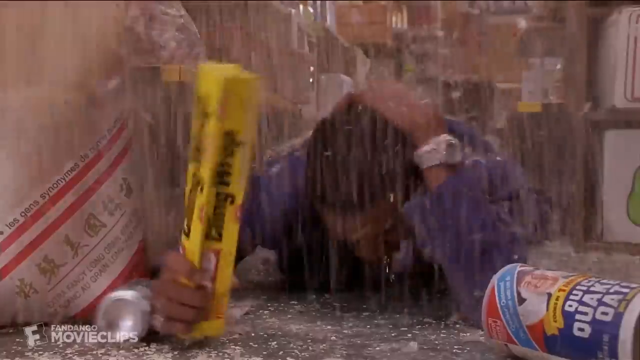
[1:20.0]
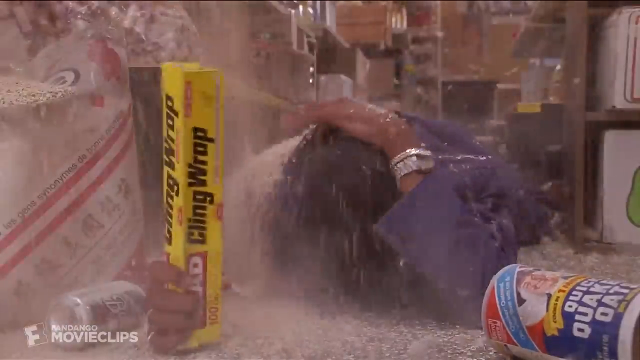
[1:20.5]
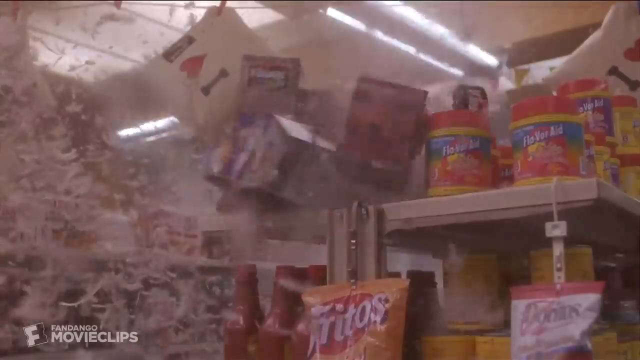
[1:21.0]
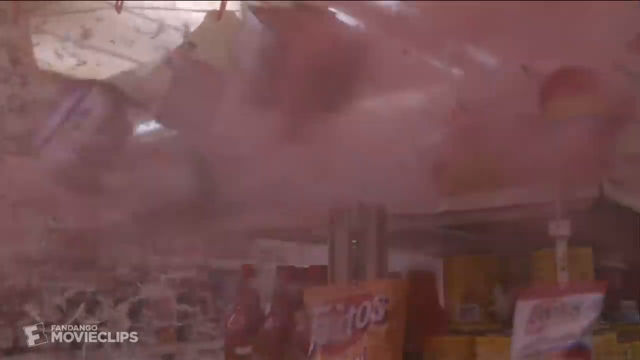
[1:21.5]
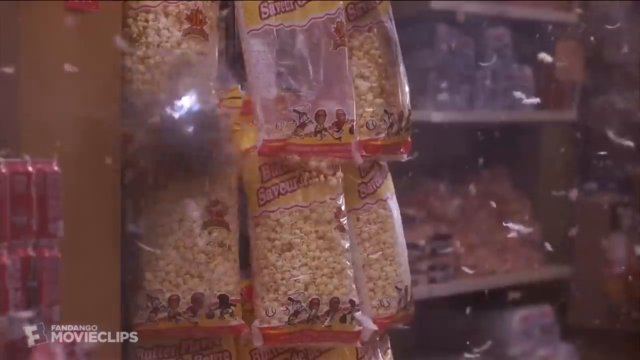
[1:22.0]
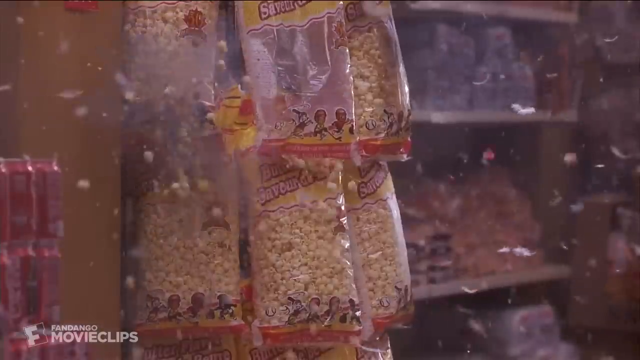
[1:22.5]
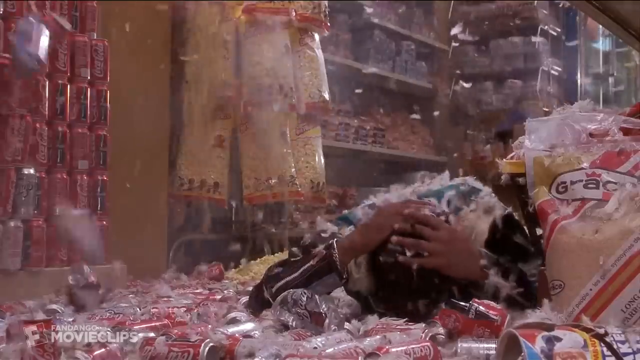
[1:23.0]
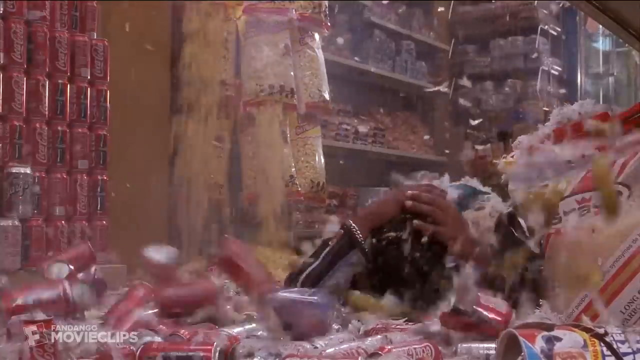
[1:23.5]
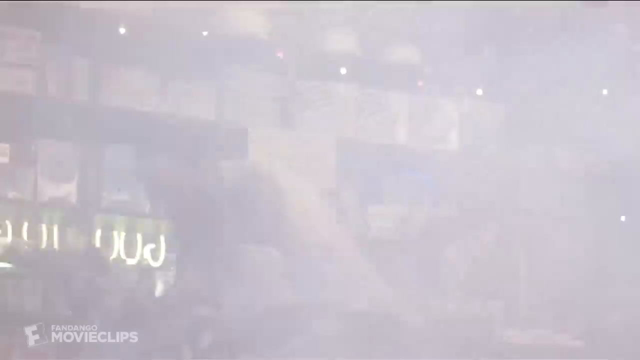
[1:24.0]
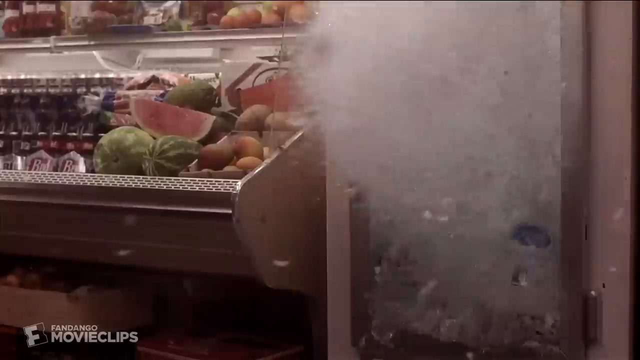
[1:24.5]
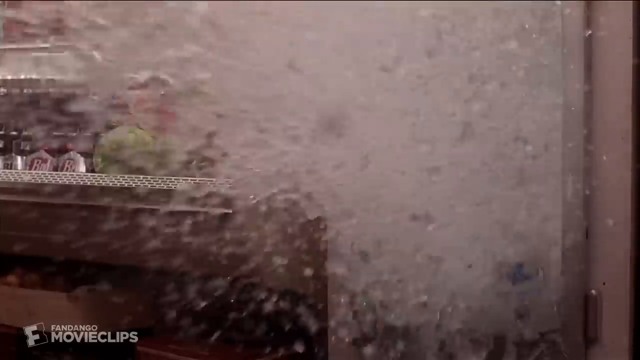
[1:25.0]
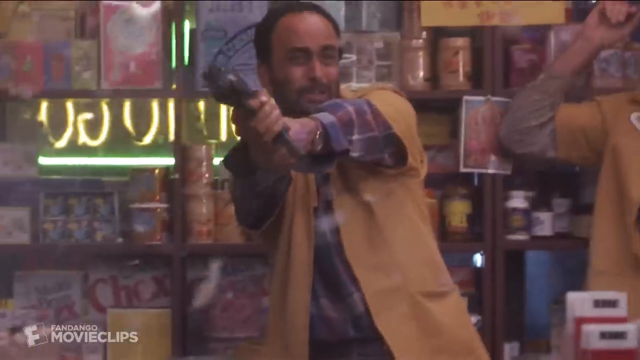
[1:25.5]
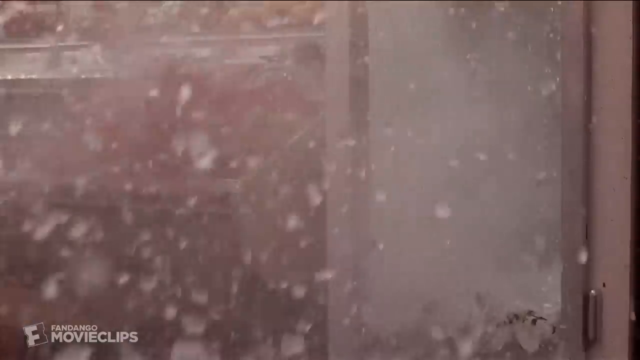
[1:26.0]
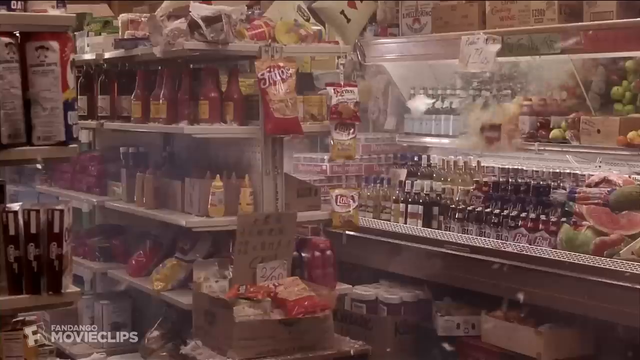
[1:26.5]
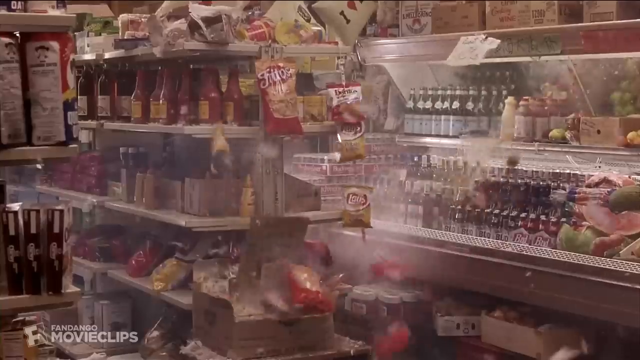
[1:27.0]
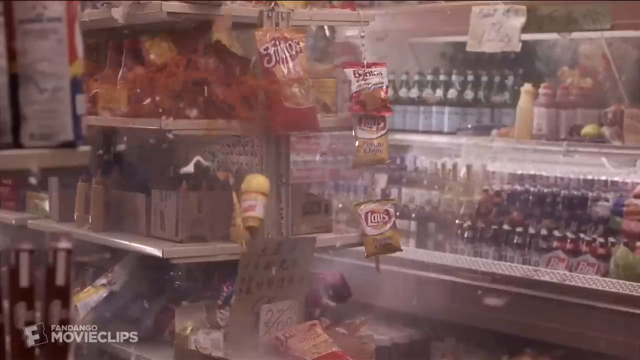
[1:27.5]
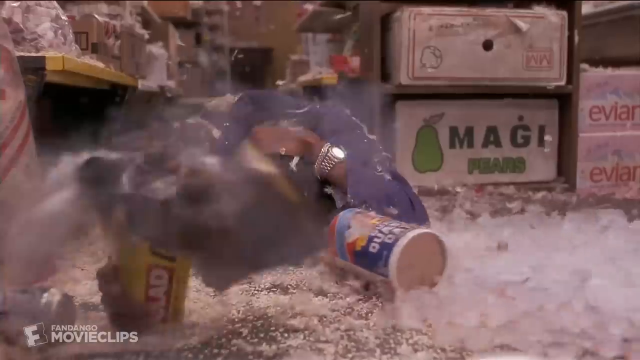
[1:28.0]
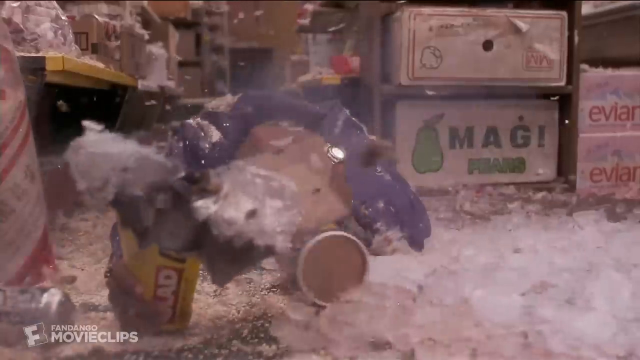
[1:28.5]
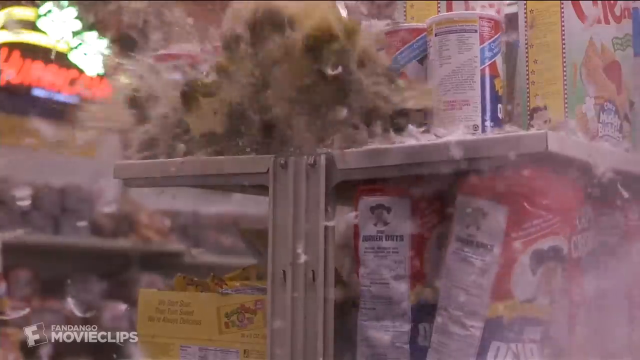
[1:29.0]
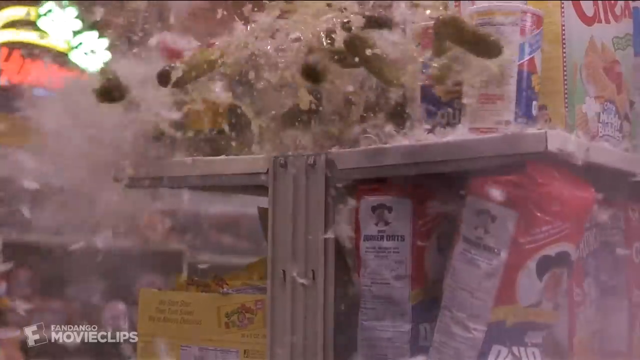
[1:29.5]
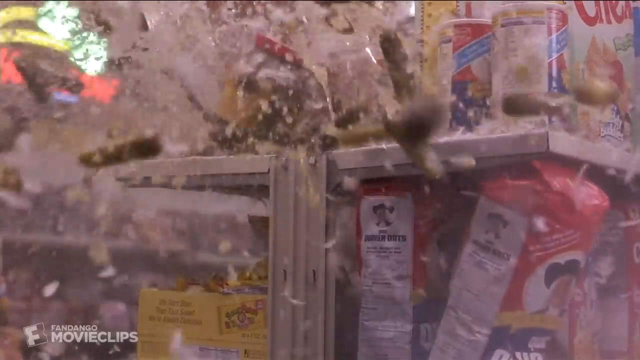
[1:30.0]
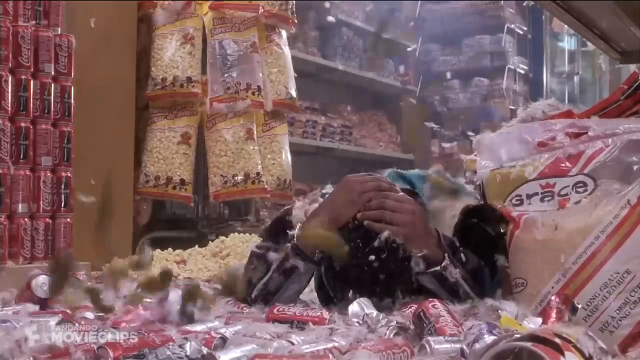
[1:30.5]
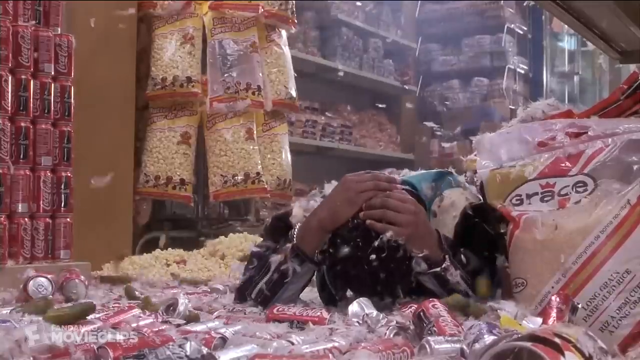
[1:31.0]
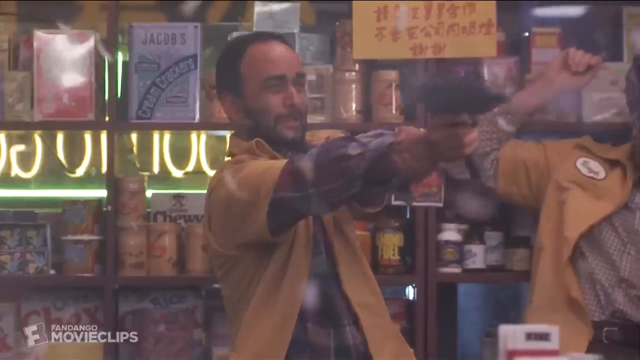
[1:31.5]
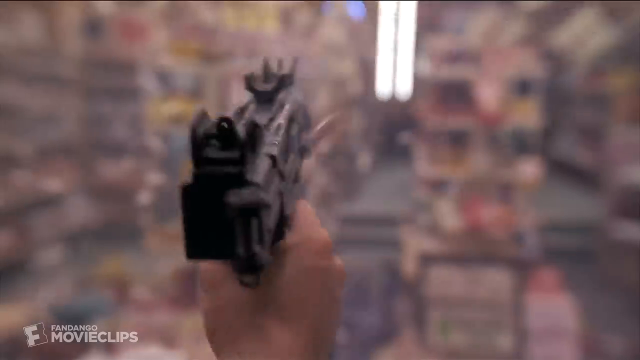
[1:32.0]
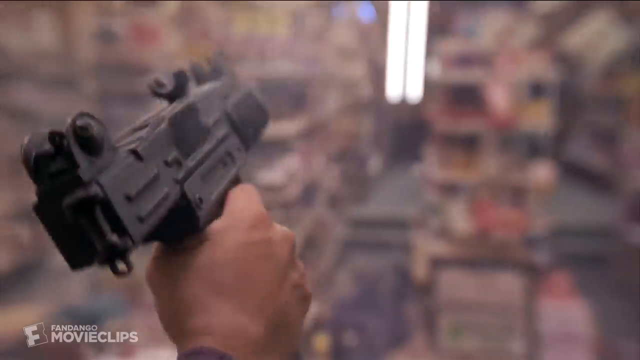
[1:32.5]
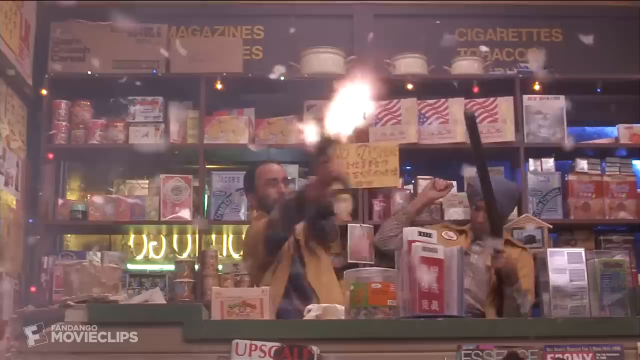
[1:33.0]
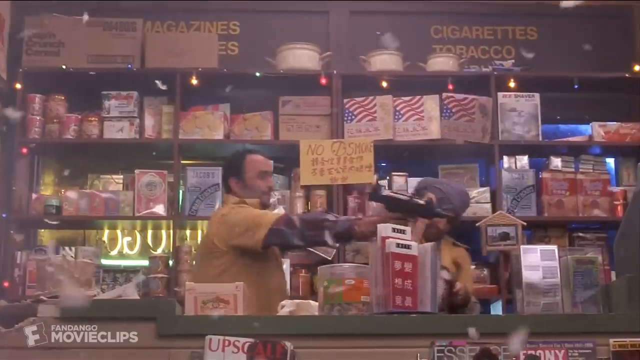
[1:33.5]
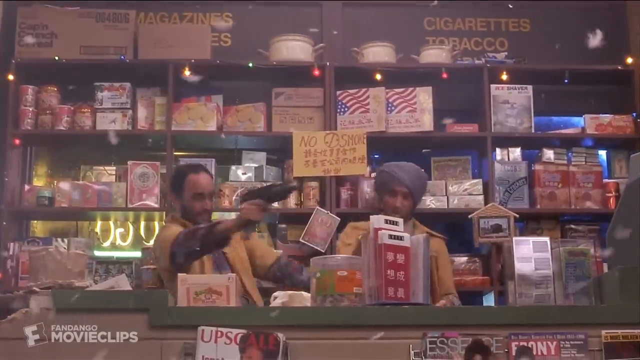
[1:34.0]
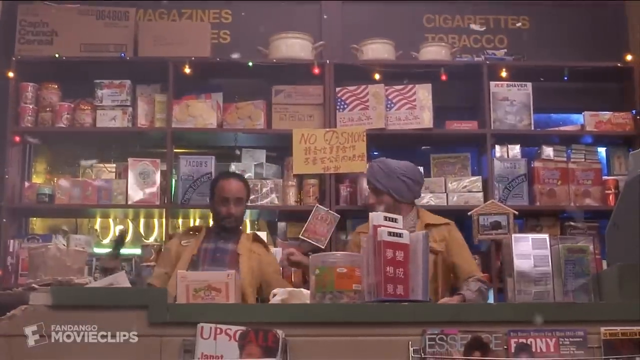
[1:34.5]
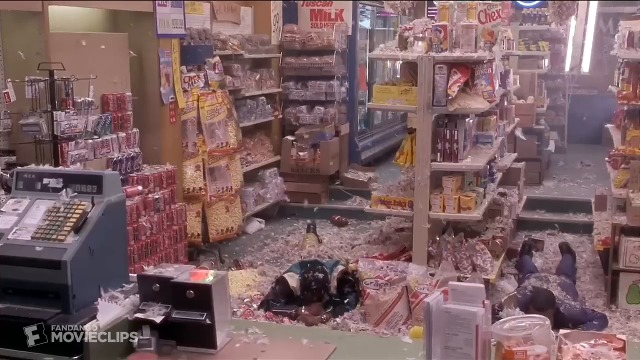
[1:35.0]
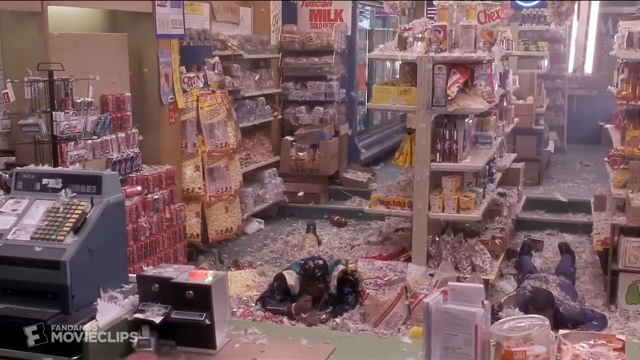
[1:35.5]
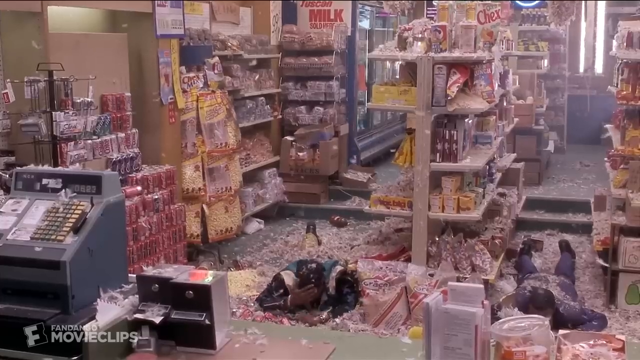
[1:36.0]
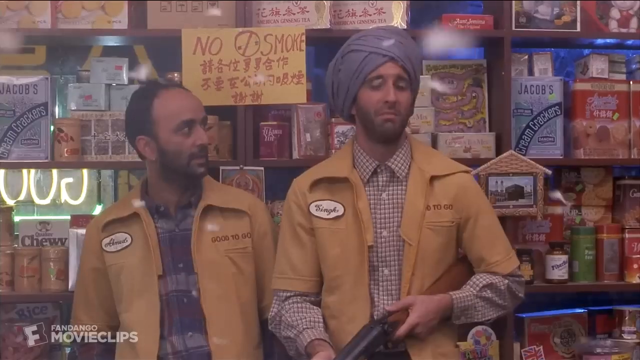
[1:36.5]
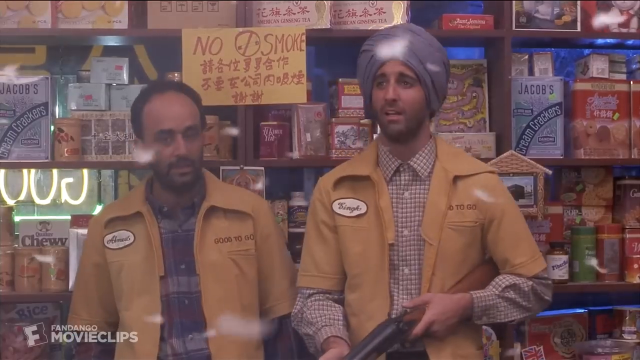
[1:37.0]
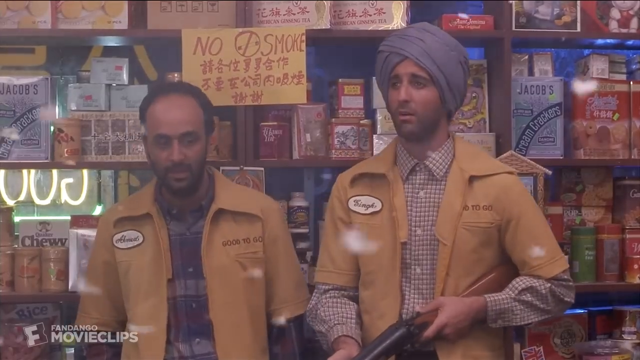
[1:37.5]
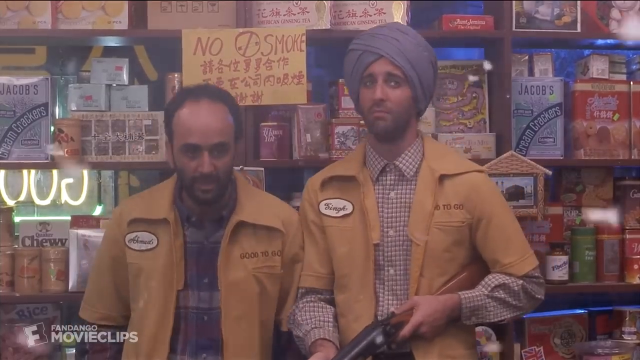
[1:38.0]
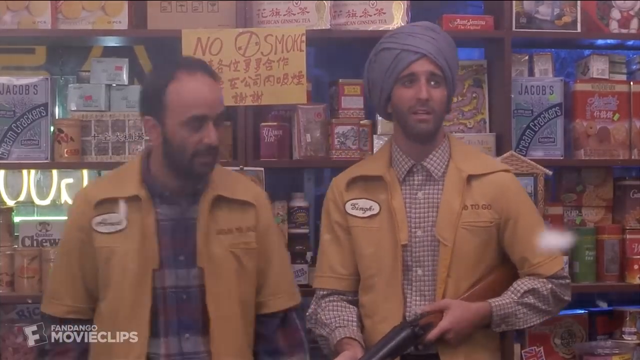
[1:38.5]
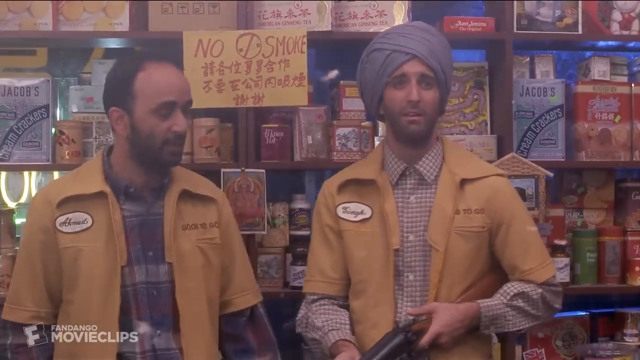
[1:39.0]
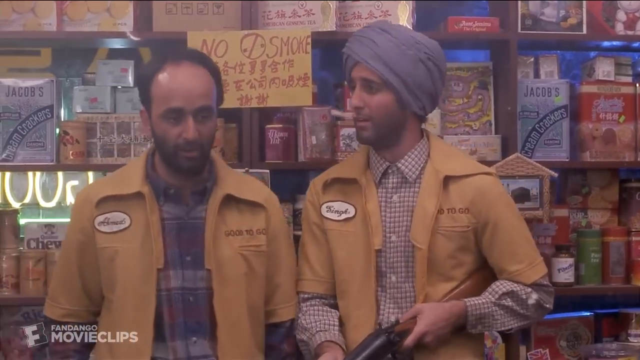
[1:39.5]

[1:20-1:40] The owners shoot at everything, seemingly unable to handle the guns, which seem heavy for them, and they make a big mess.